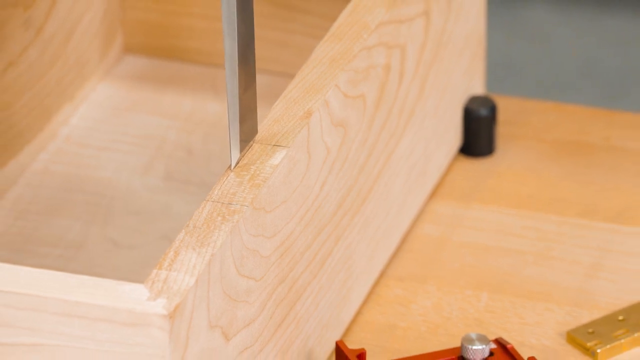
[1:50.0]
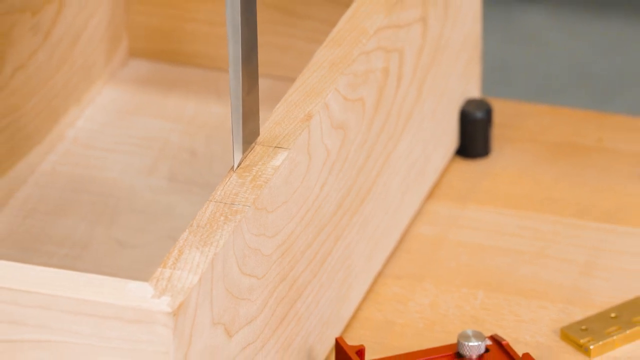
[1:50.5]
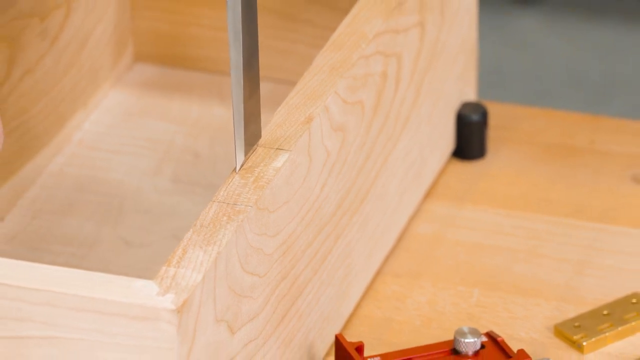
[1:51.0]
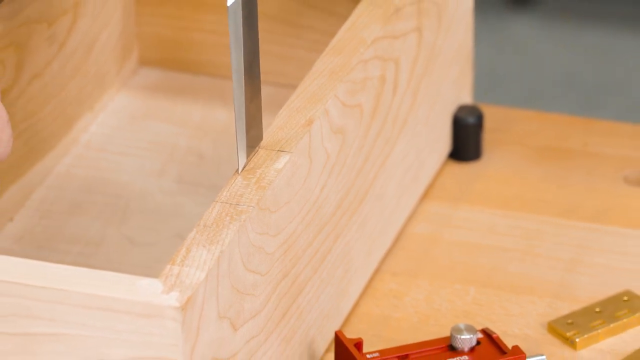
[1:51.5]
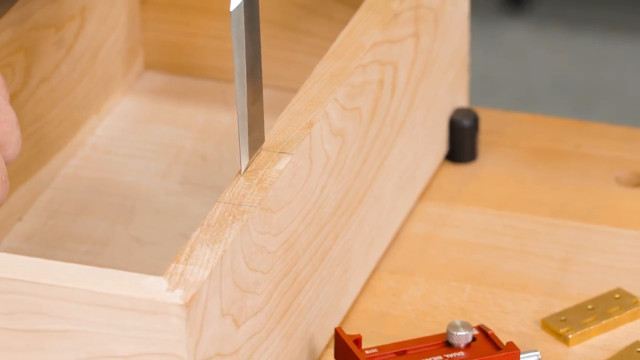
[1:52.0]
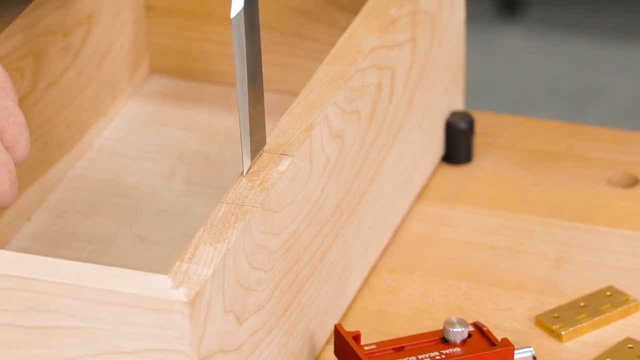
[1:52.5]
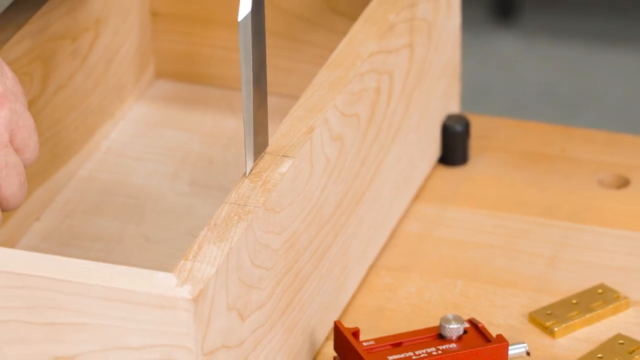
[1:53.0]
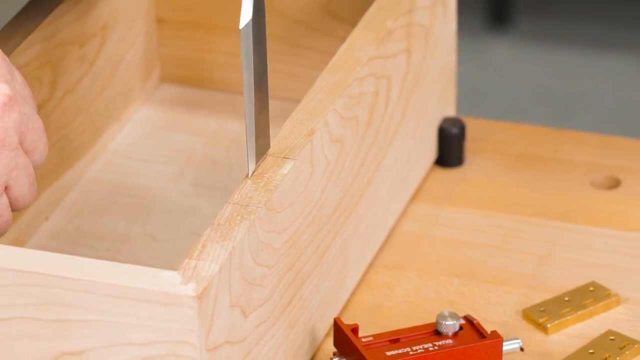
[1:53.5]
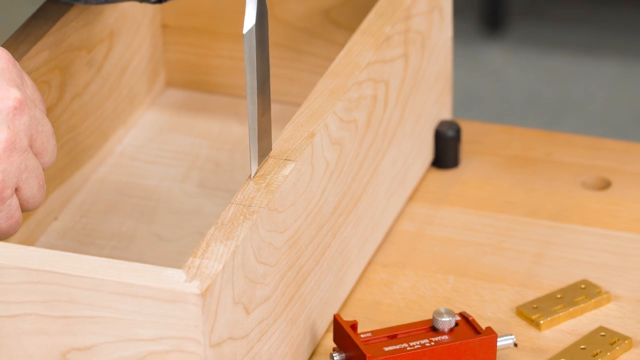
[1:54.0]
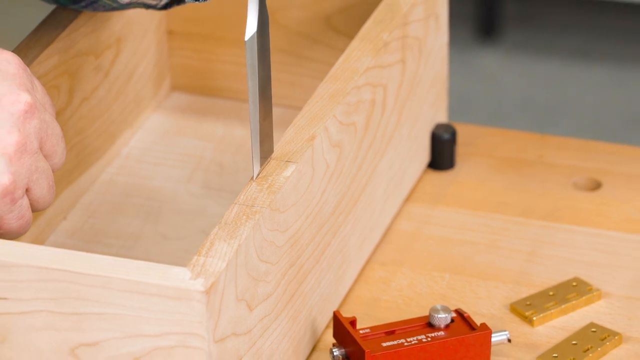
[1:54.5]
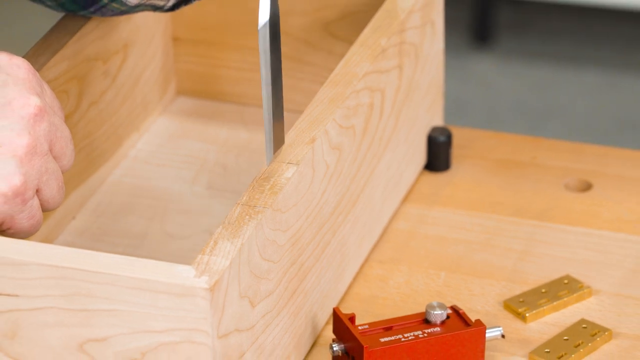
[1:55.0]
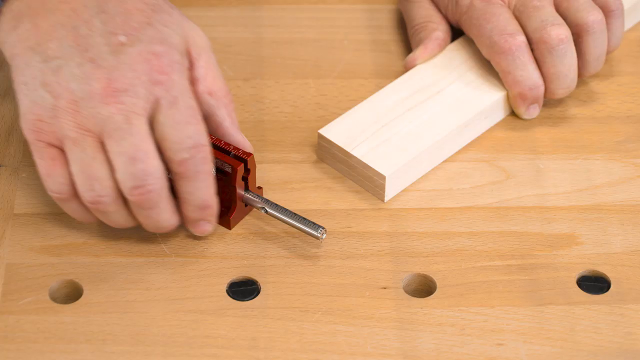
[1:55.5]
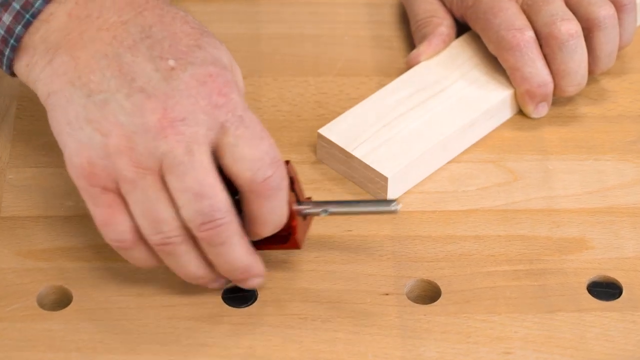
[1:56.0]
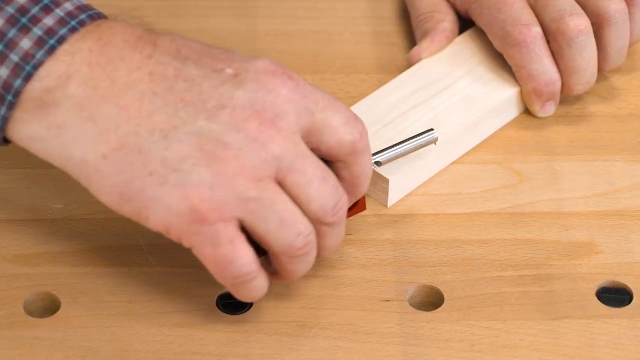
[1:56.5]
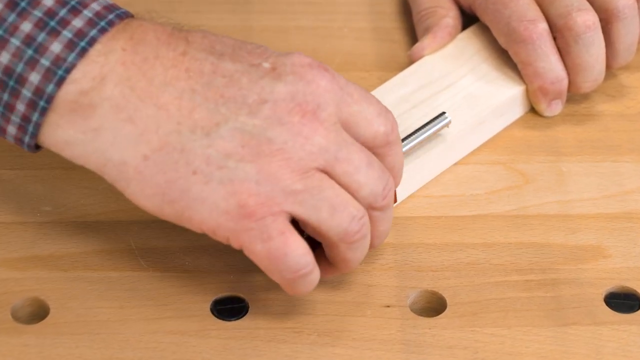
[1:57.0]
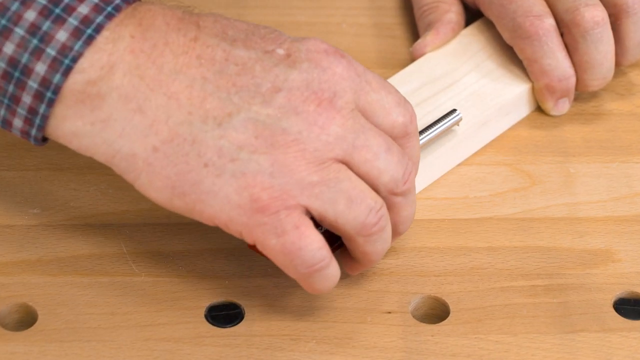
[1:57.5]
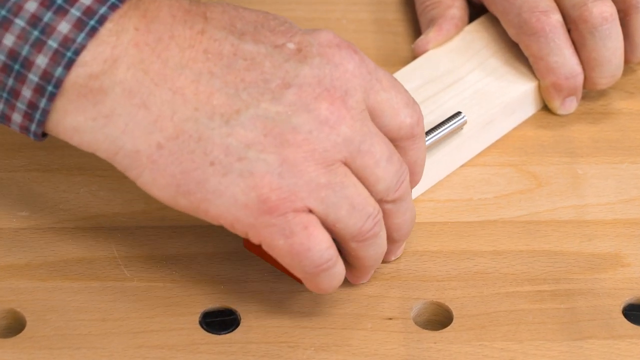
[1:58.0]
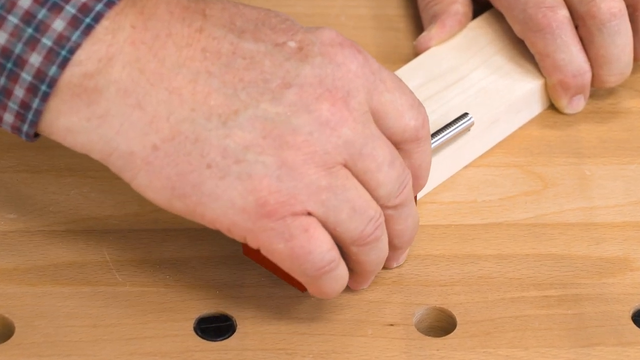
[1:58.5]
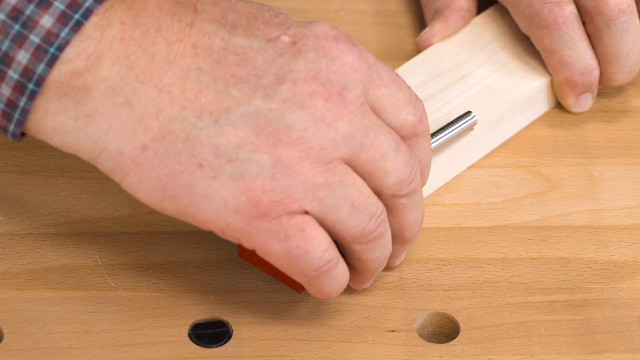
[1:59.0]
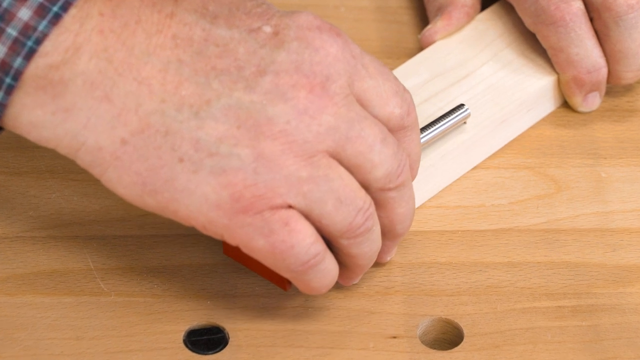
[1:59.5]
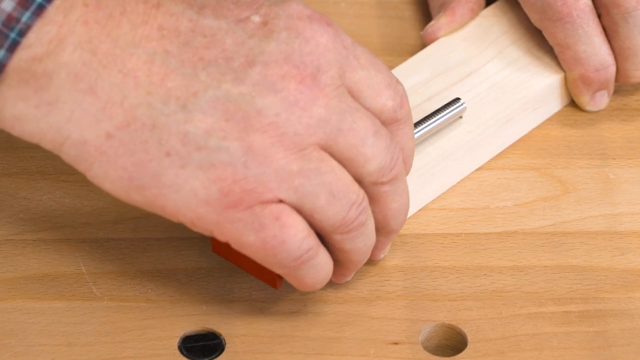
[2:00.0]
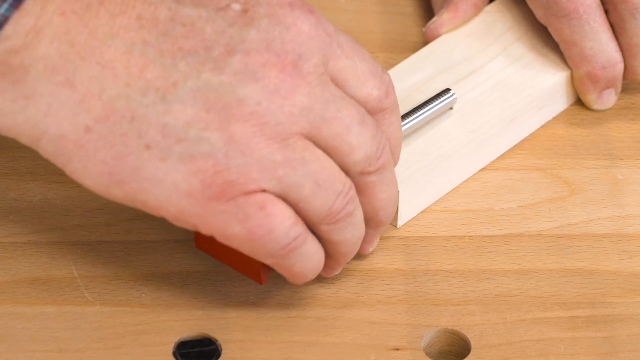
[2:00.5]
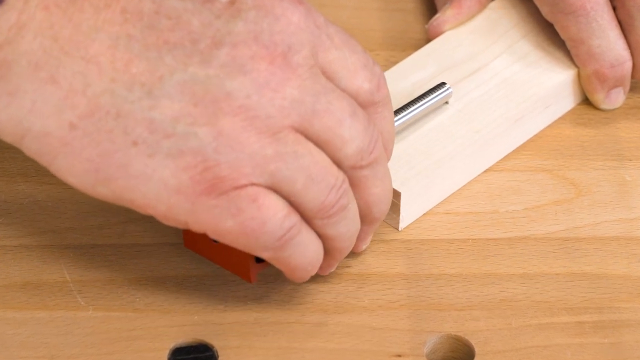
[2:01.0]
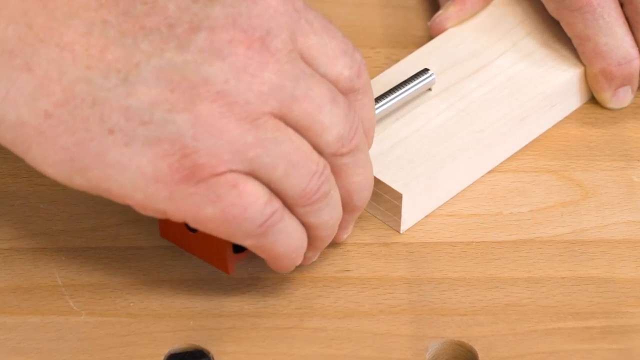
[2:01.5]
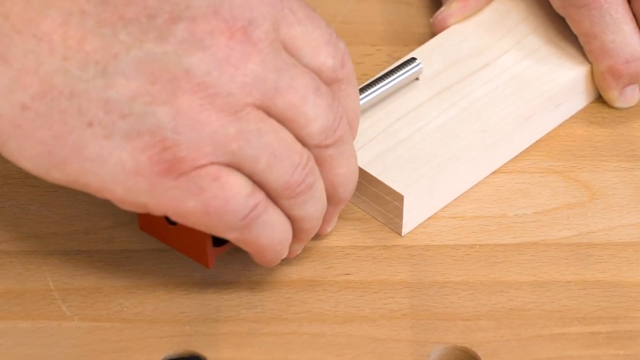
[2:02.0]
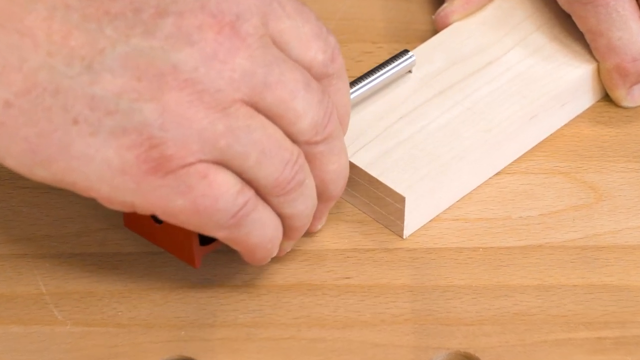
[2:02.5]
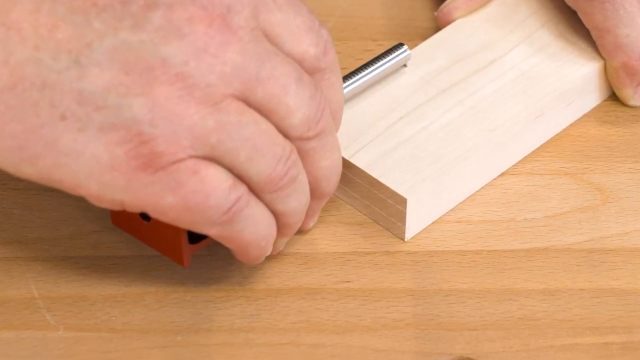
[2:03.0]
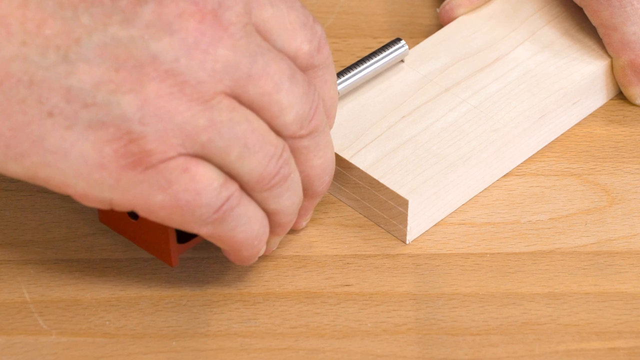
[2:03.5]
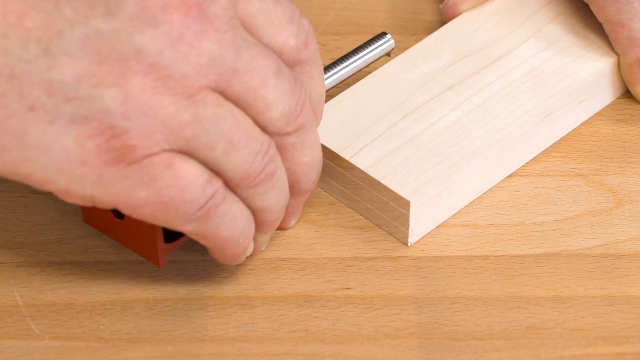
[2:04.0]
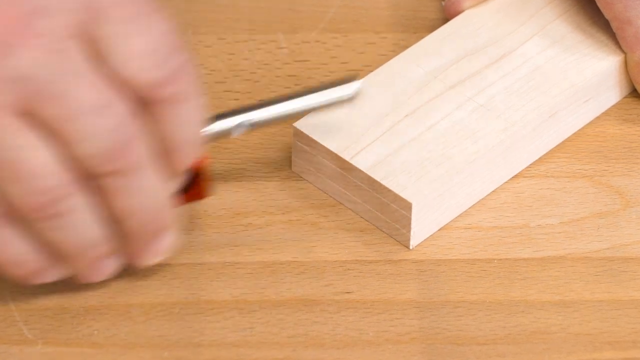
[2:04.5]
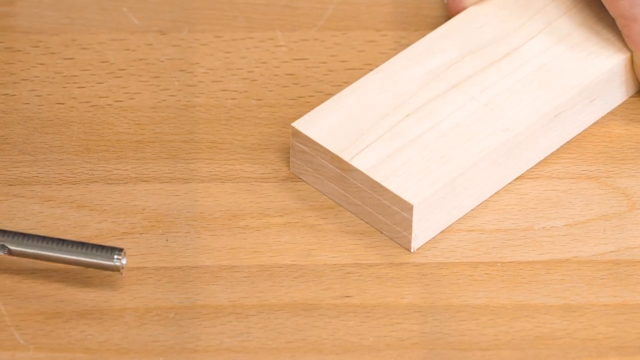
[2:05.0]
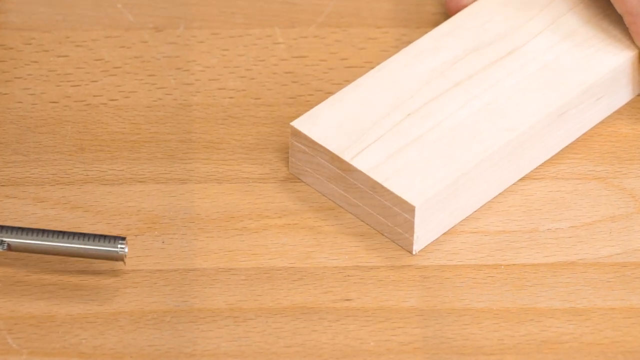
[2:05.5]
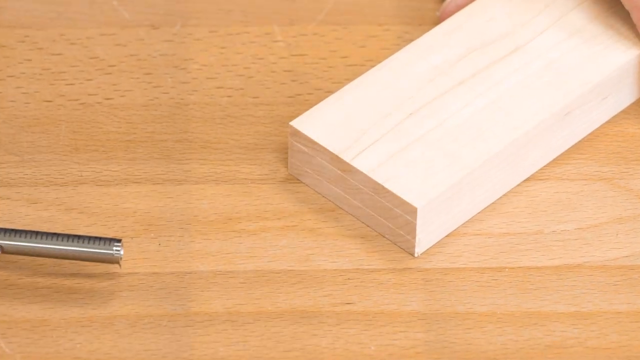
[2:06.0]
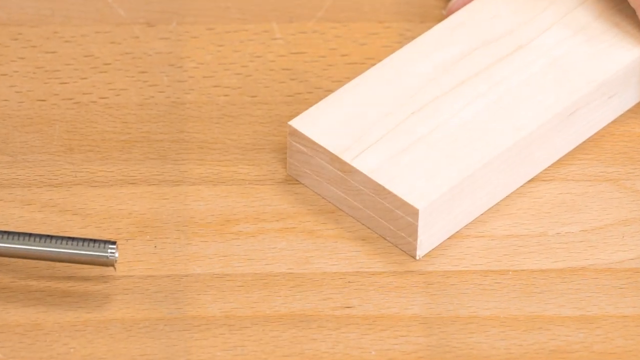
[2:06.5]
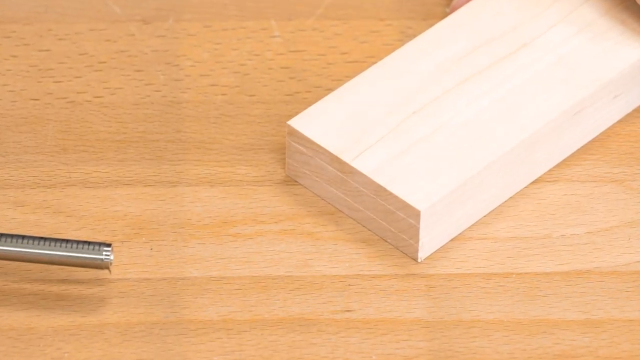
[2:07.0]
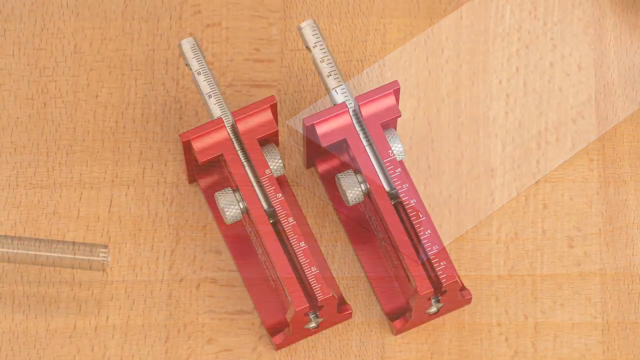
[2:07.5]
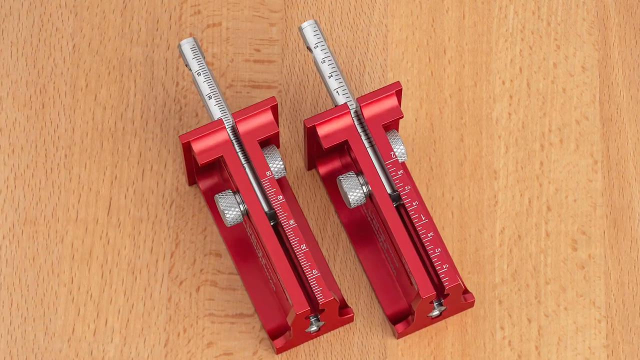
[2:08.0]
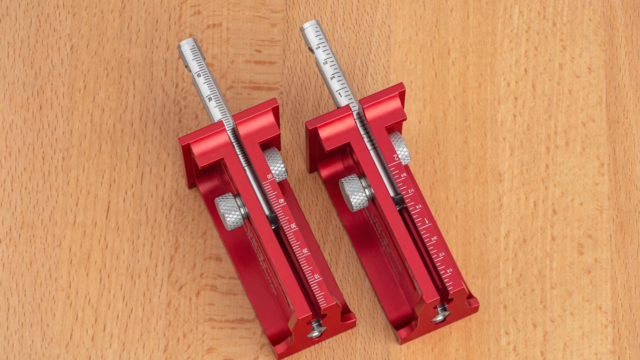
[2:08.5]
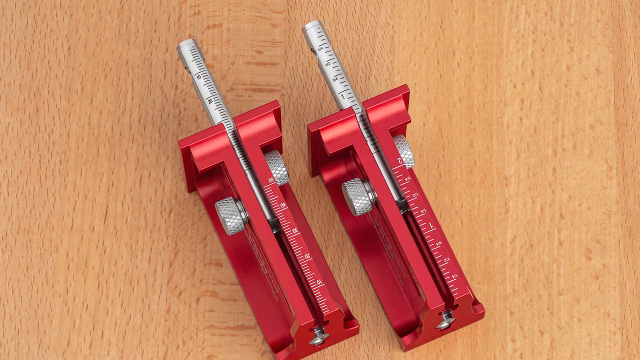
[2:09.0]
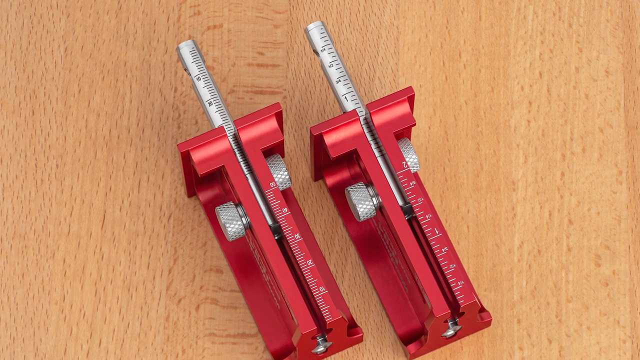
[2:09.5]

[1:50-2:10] The man has marked where he wants to put hinges on the wooden box that has a wooden lid. His workbench has holes in it, and a black thing is now popped up from it, apparently to hold the piece in place. He has a chisel, a kind of awl, and seems about to chisel out the marked area. He then takes a sort of small 2x4 and uses it to measure something else.